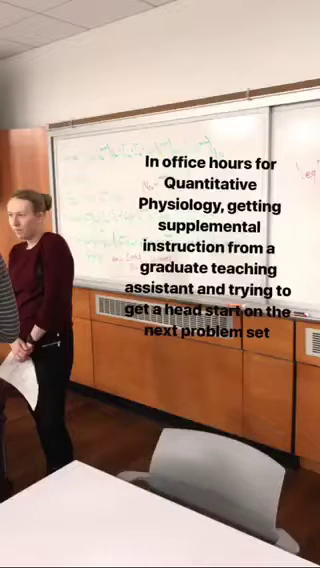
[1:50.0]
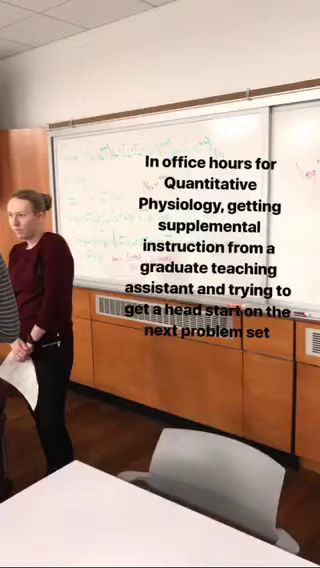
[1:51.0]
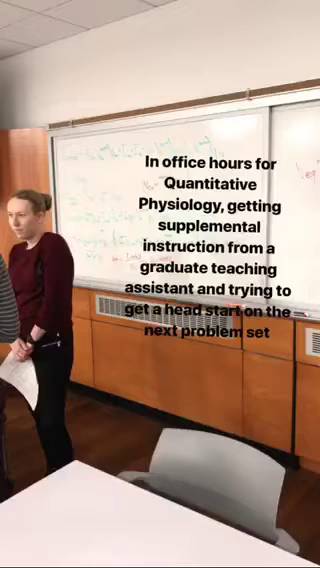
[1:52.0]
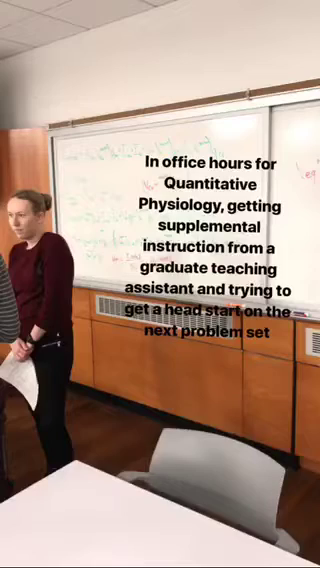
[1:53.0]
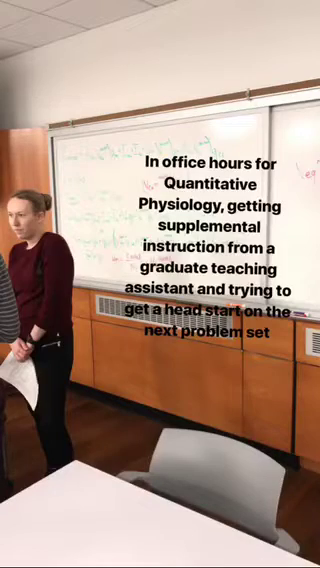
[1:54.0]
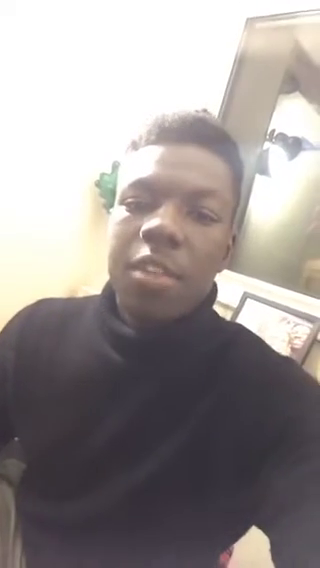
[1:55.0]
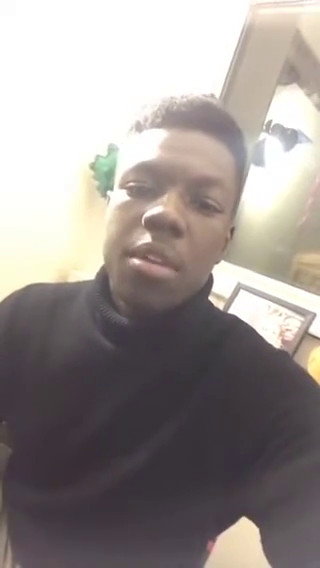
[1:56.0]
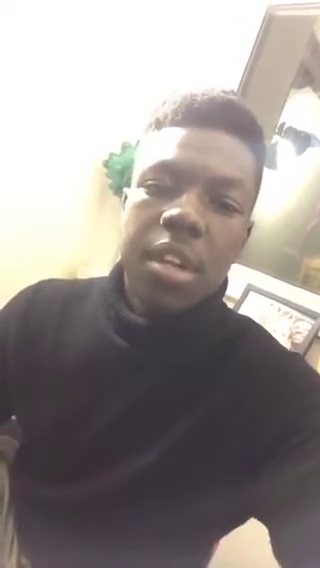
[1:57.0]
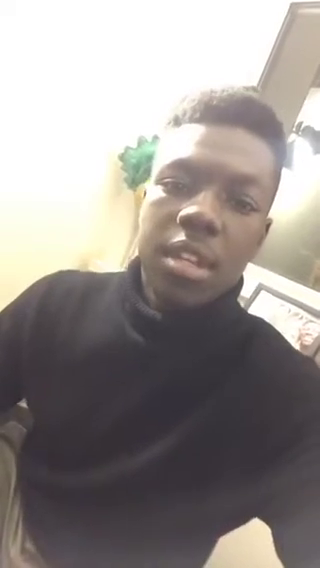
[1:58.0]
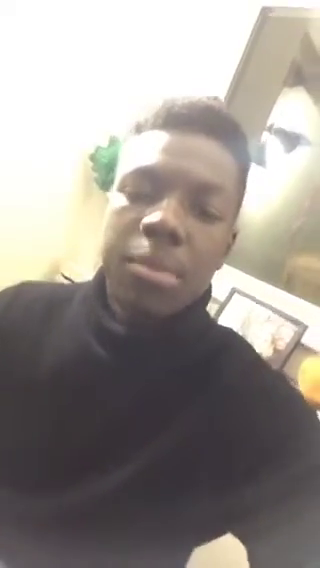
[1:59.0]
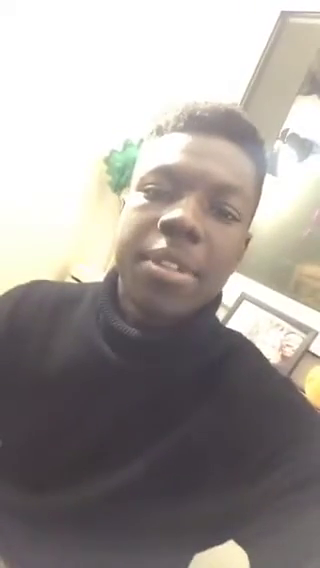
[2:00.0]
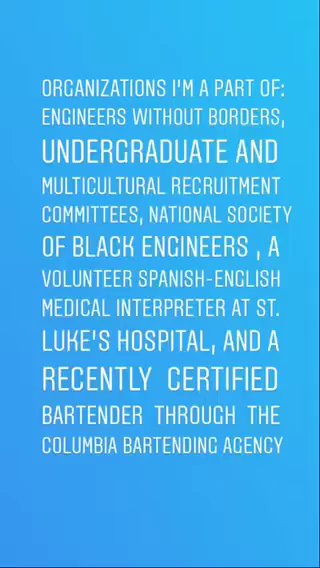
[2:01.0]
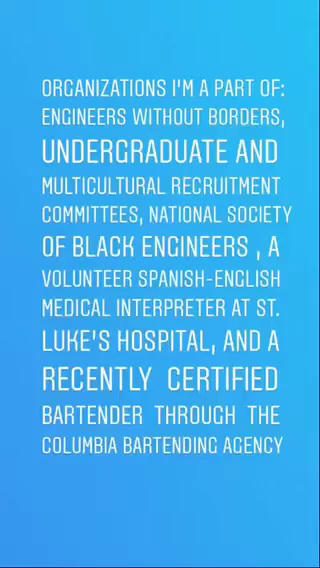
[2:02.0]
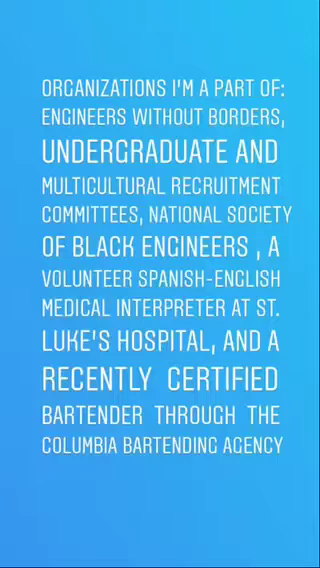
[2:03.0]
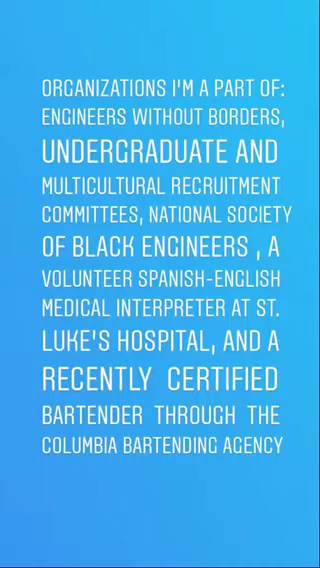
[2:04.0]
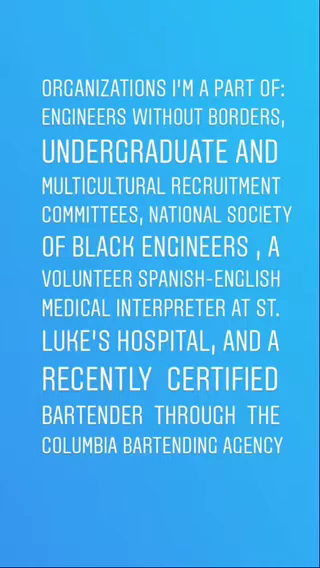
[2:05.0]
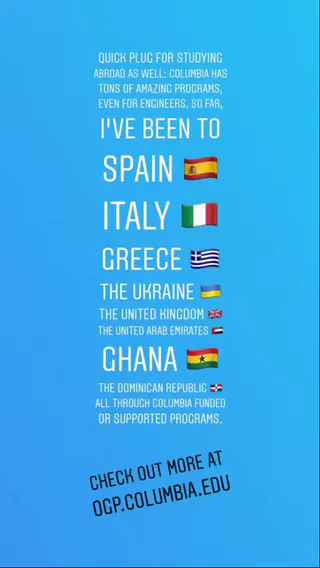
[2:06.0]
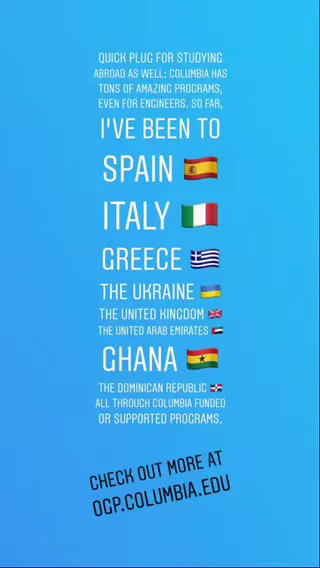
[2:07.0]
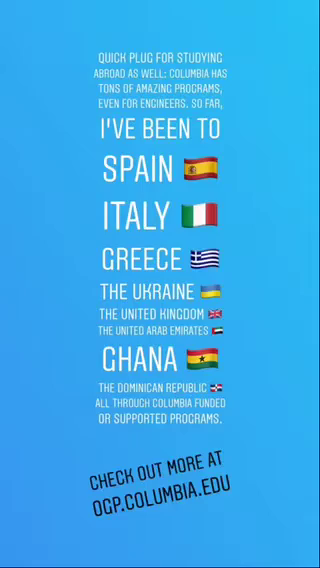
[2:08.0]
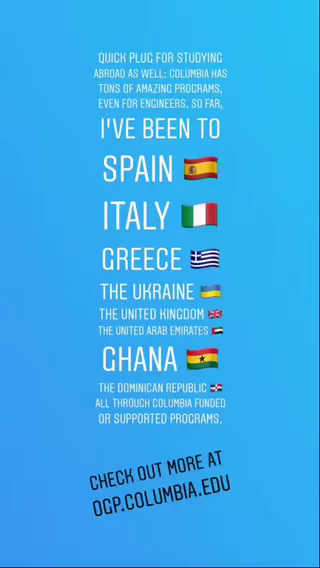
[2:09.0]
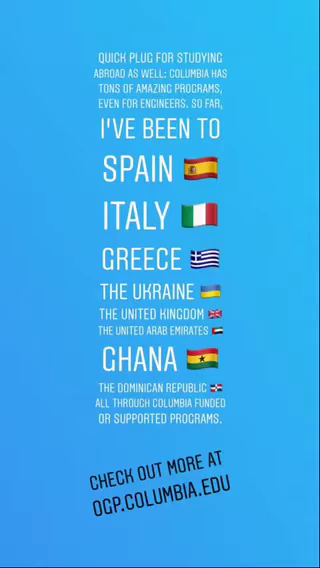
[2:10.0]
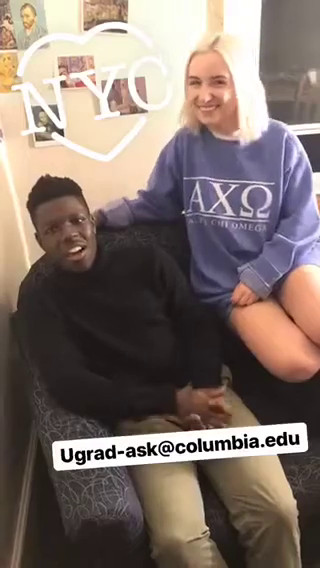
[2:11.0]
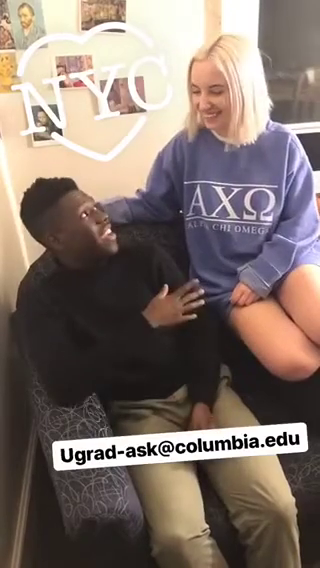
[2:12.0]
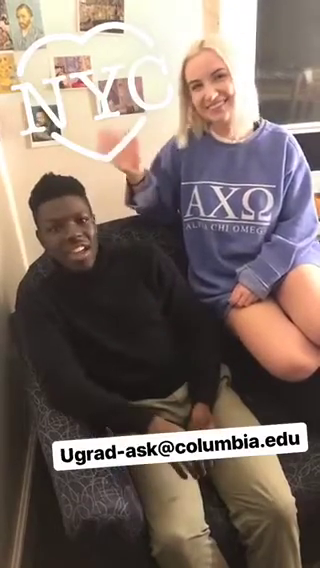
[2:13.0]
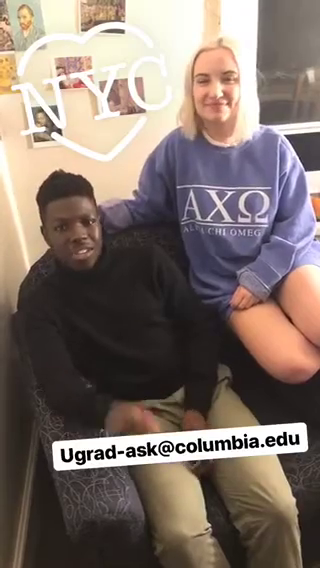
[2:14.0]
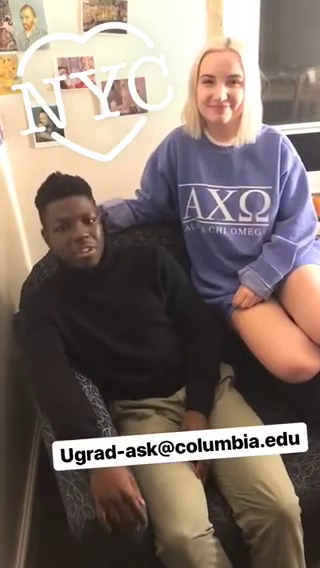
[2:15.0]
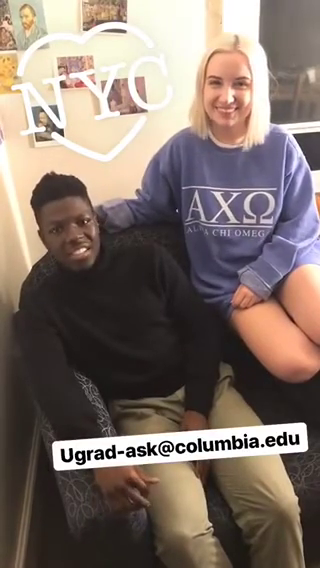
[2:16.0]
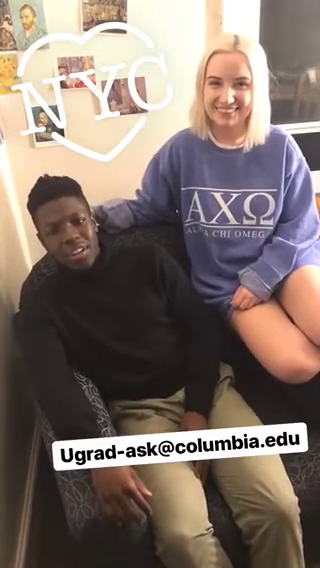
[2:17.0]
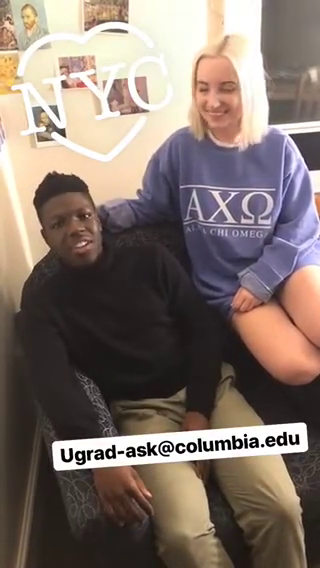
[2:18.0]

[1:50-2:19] There is a green-brown setting on the wall. A white teacher is in front of the class, clutching a paper; the teacher has brown hair and wears a maroon top and black pants. There is a white marker board with writing in green ink. An overlay reads "office hours for quantitative physiology. Getting supplemental instruction from a graduate teaching assistant and trying to get a head start of the next problem set." The young man is then shown recording himself with a phone camera inside a building, where bright light makes the room look foggy. He wears a black polo neck and continues to record himself.